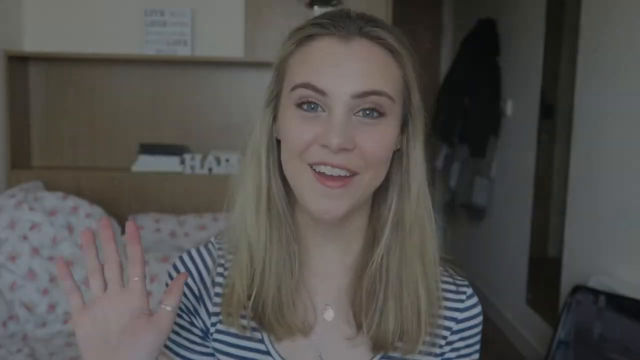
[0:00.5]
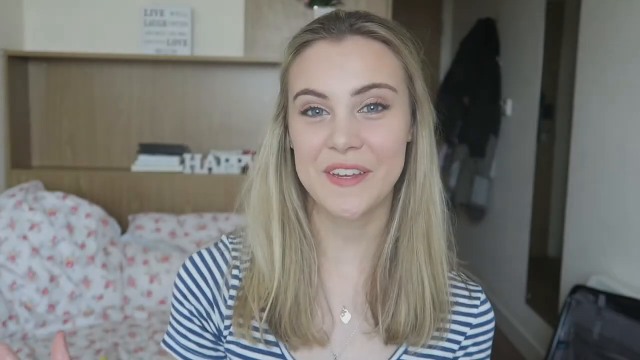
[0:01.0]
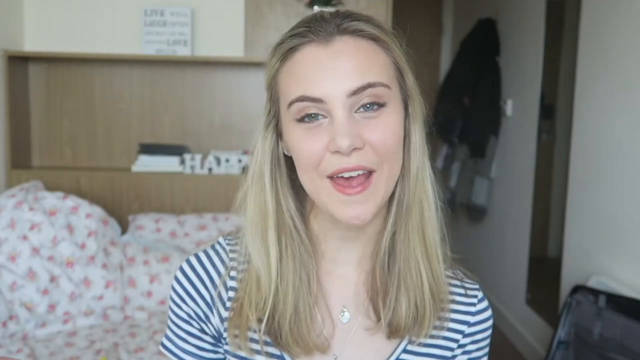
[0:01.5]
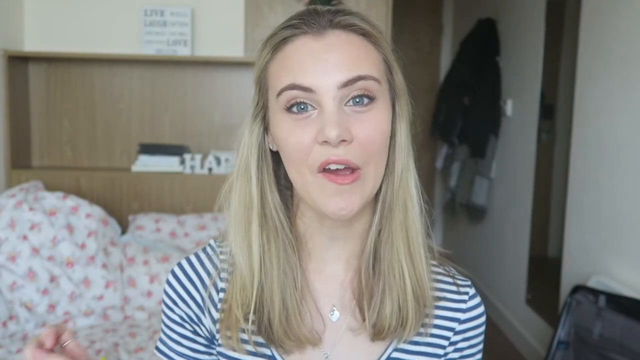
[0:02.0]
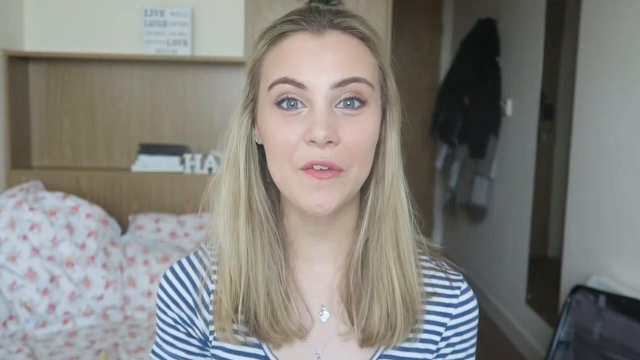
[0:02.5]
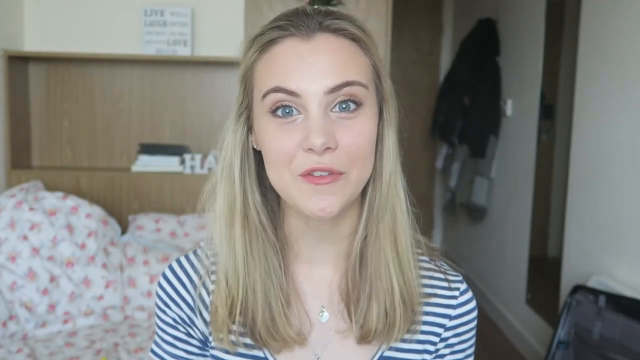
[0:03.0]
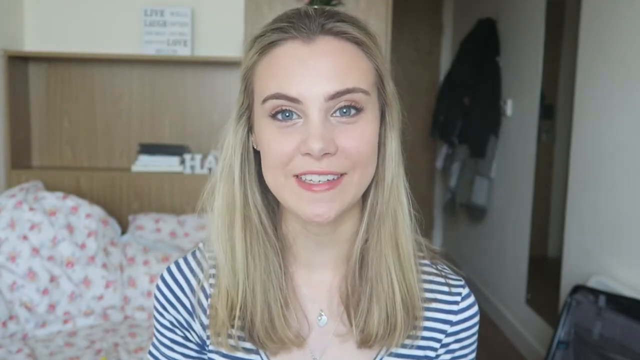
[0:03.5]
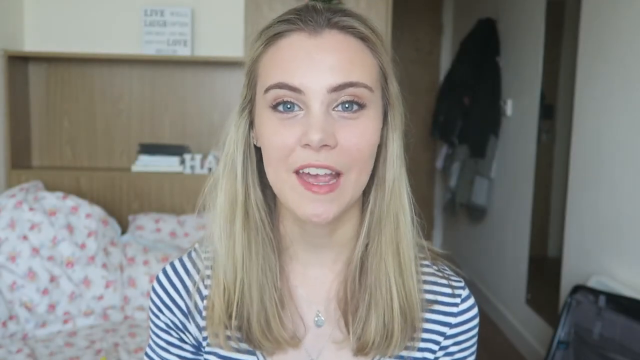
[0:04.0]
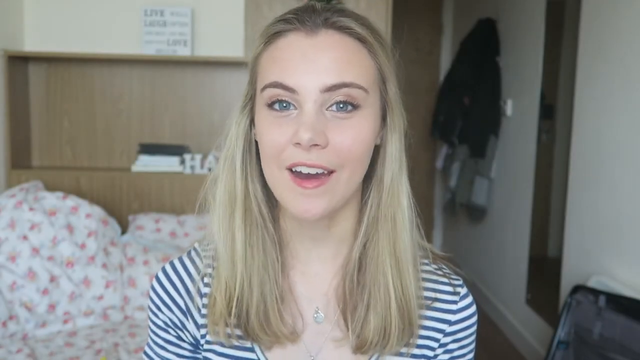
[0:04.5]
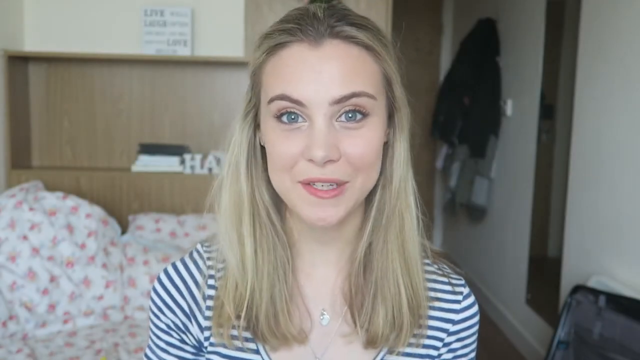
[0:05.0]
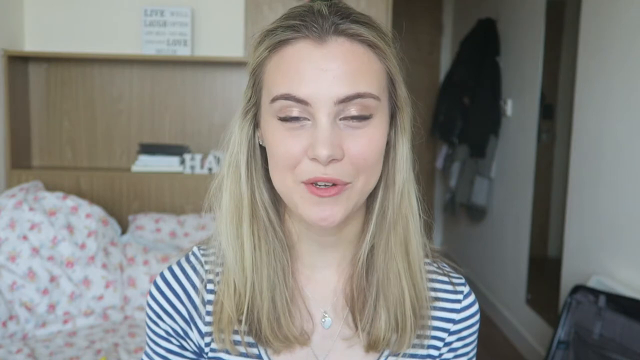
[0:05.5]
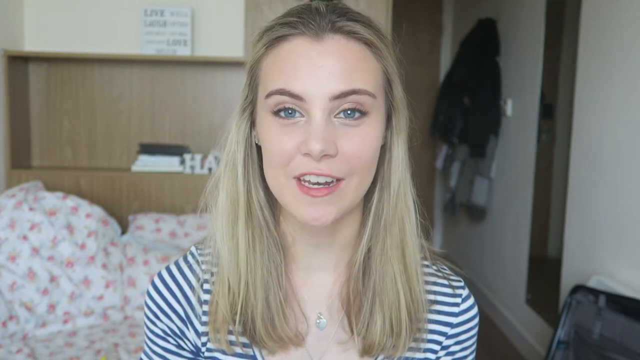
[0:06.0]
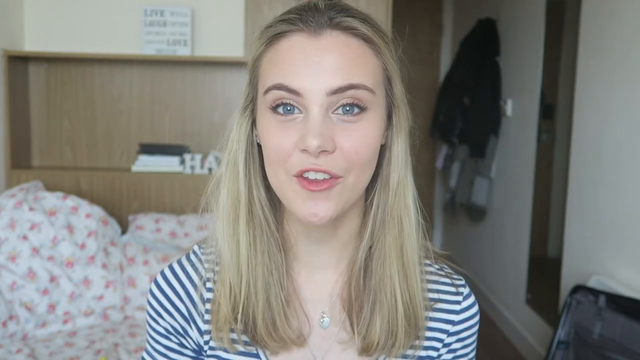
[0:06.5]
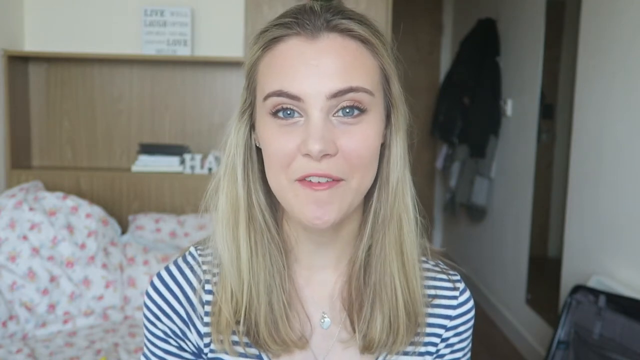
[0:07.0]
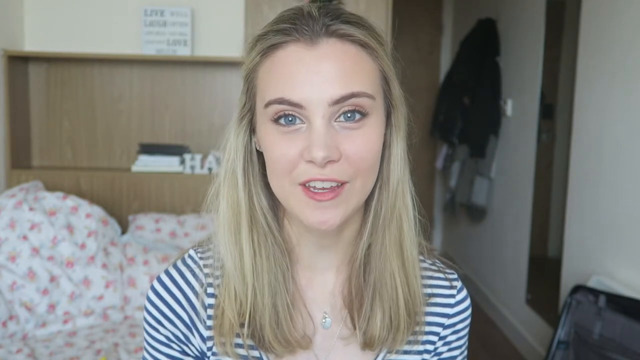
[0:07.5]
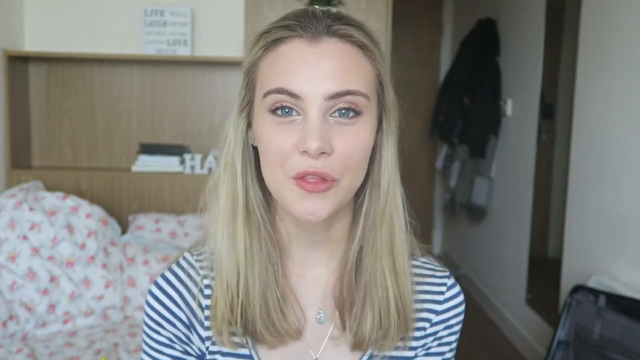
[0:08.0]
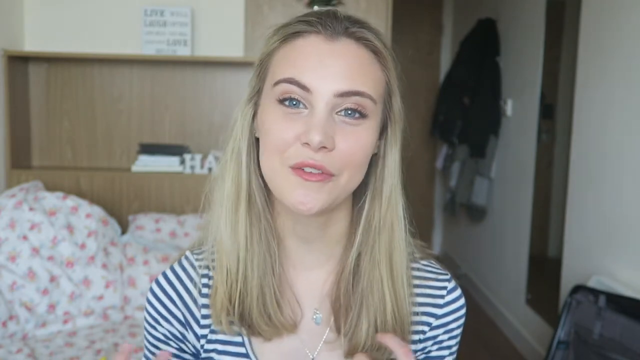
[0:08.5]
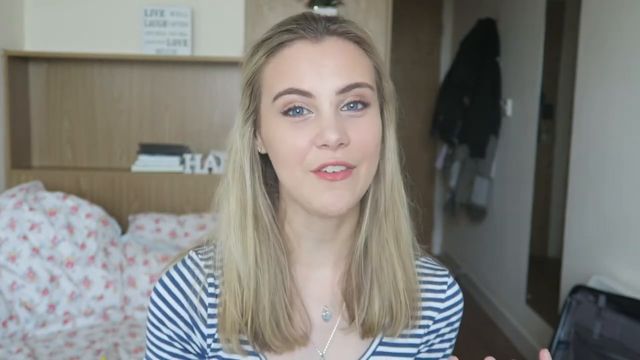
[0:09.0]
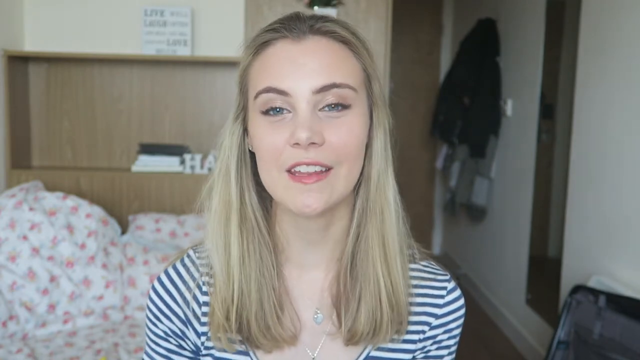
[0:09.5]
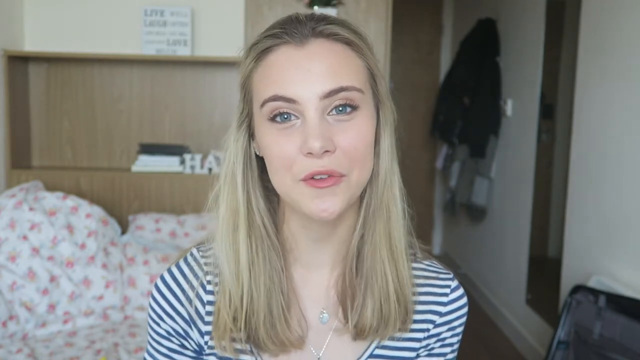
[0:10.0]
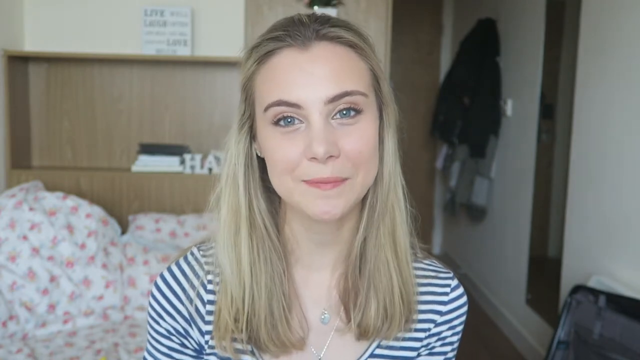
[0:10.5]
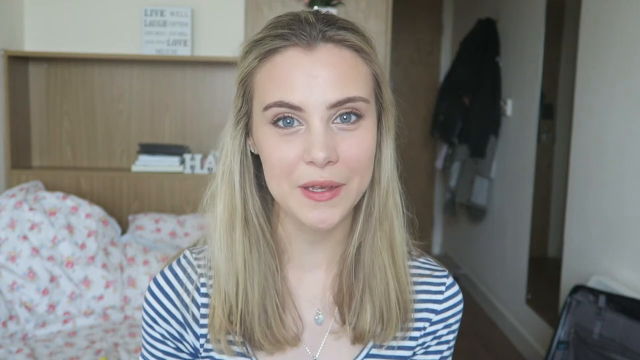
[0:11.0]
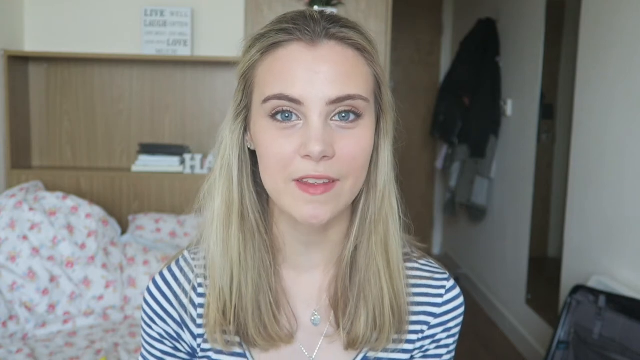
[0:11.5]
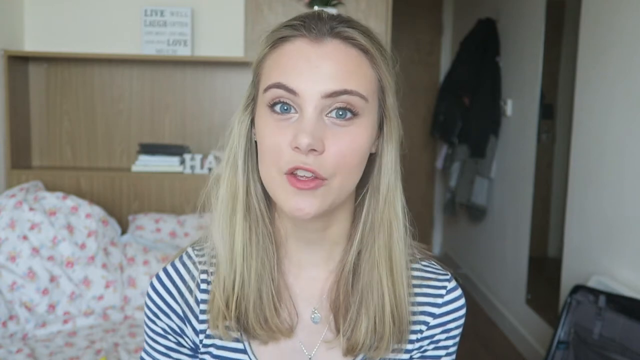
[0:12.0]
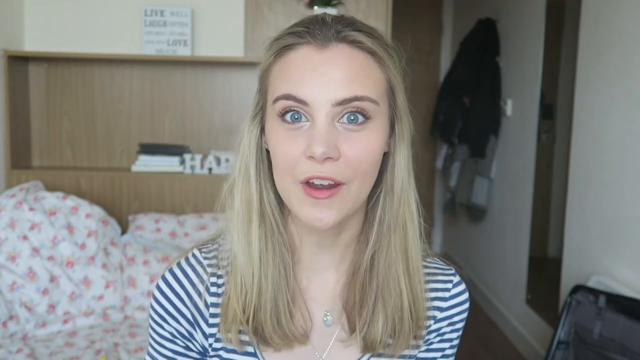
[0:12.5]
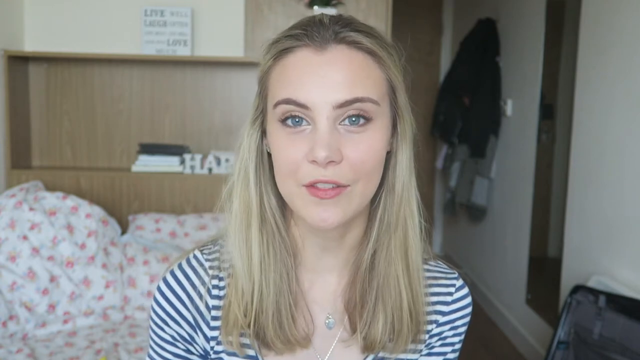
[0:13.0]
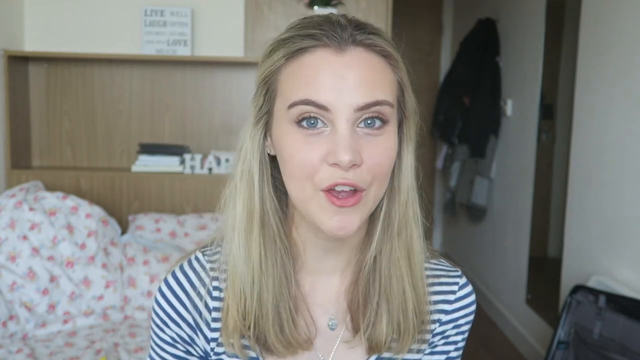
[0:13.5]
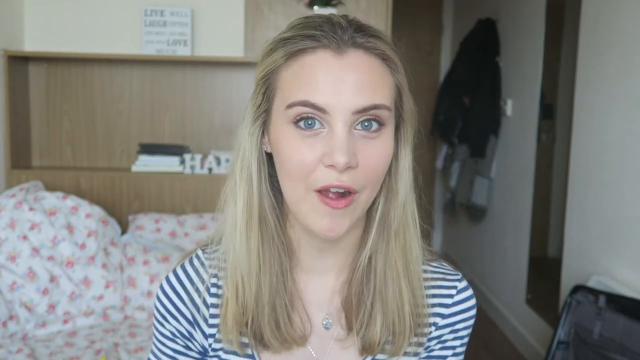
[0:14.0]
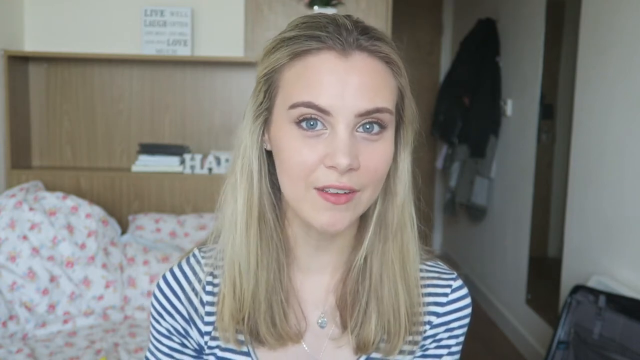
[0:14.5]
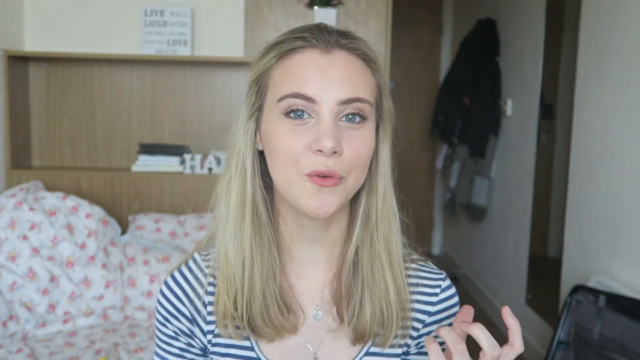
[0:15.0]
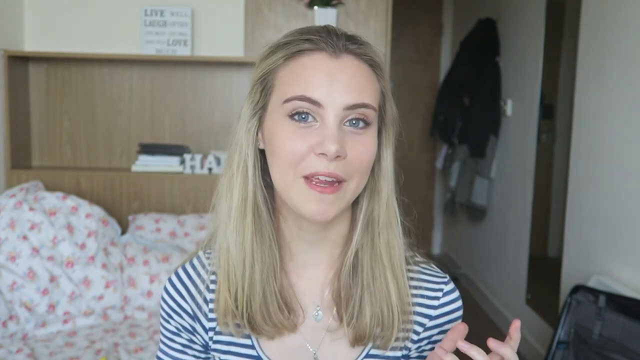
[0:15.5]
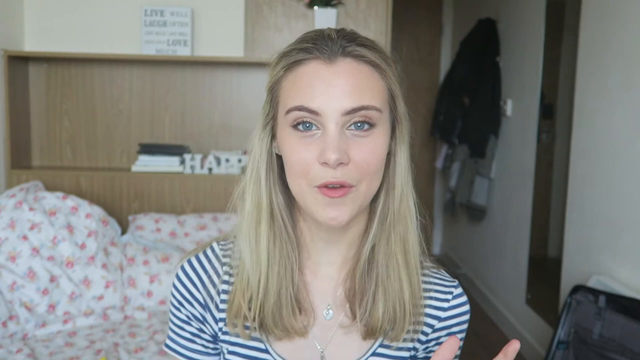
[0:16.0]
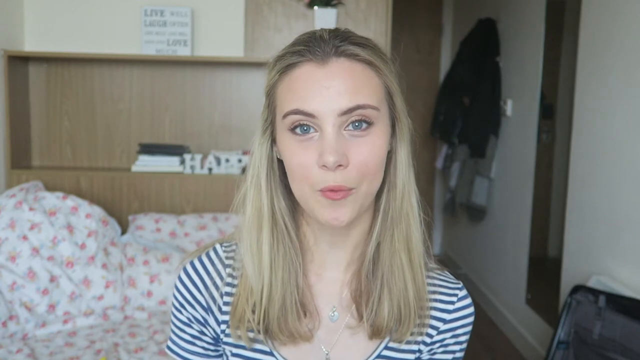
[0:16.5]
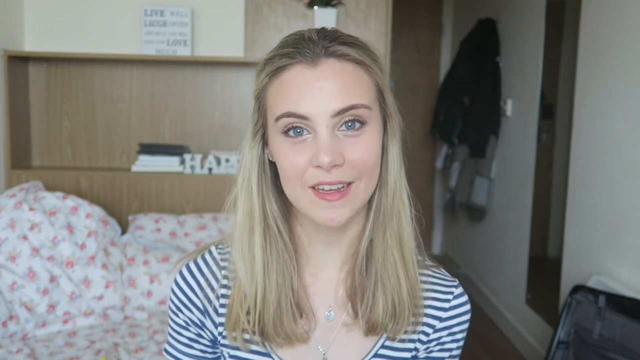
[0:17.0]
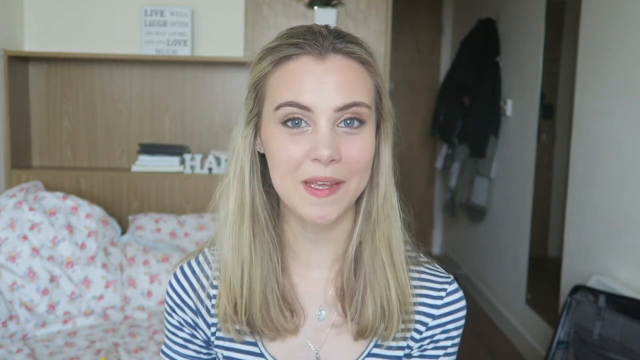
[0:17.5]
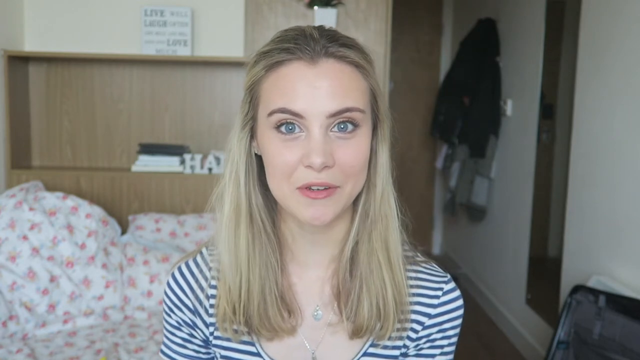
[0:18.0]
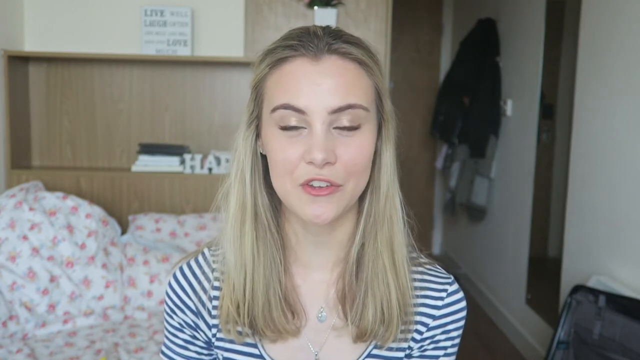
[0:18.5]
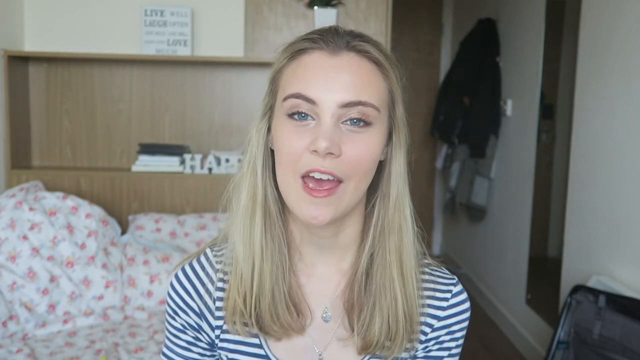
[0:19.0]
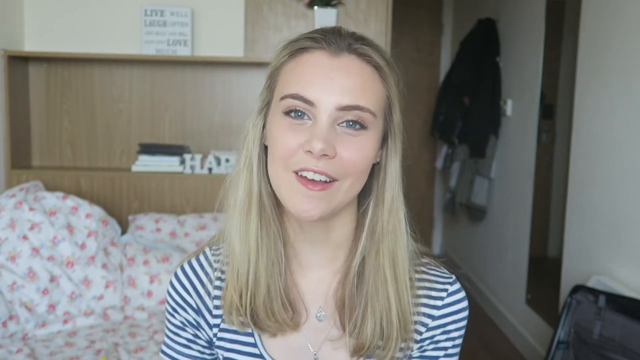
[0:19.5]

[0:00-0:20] A young, very pretty blonde woman is in the center of the screen, visible from the shoulders up. The front part of her hair looks like it is pulled back a little, and the rest falls straight in front of her shoulders, coming down to just below them. She wears a little lipstick and has light eyes that look like they may be blue; she is Caucasian and fair-skinned. Her shirt is blue and white with thin horizontal stripes, and she wears a pendant necklace, possibly two. She is talking to the camera. The setting looks like a dorm or a bedroom of some sort, with what look like printed sheets or pillows in the background, white with a small floral print, and some coats hanging on the back of the door. On the left side of the bed, the headboard looks like a wood cabinet of some sort, with a few white and black books on it. There are block letters that probably spell "happy," with the Y cut off, and a small square piece of "live, love, laugh" wall art on top of the wooden cabinet.